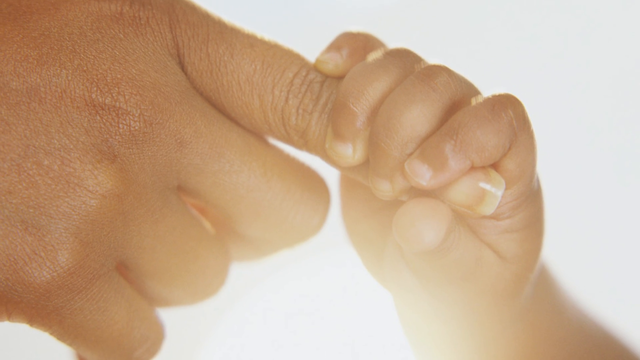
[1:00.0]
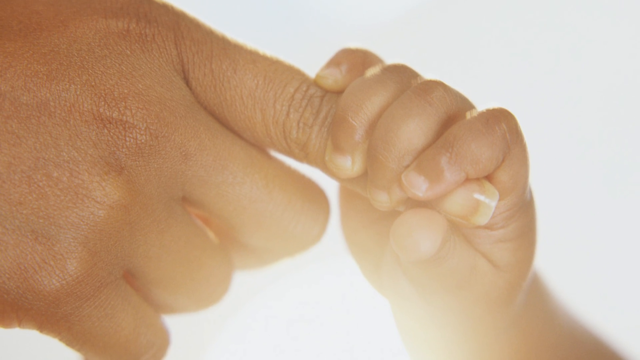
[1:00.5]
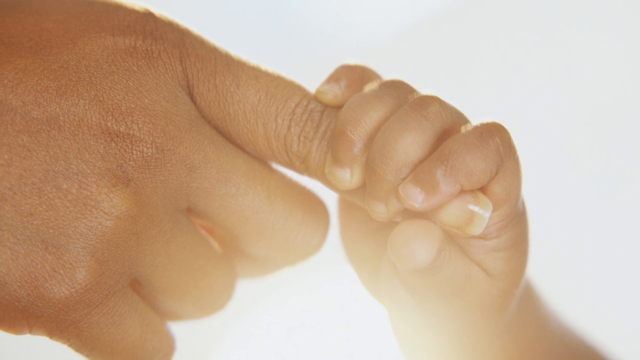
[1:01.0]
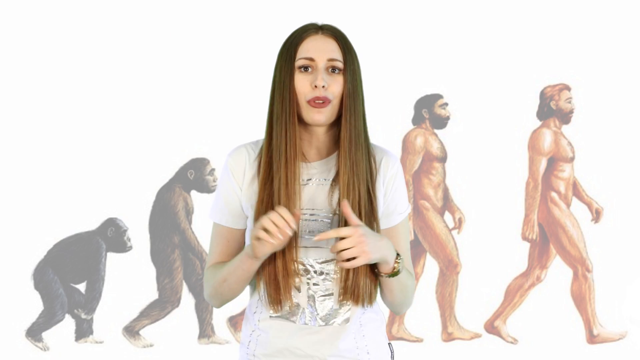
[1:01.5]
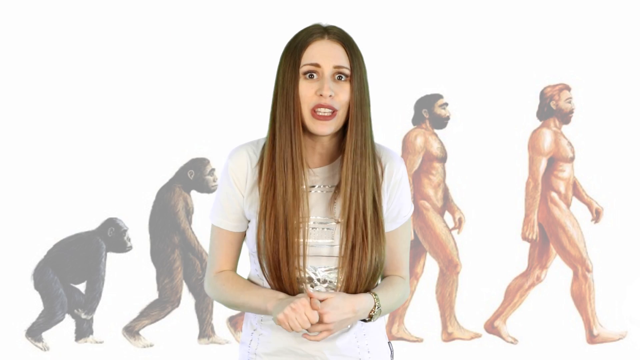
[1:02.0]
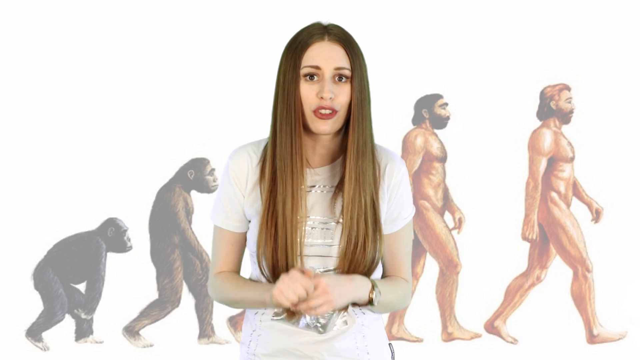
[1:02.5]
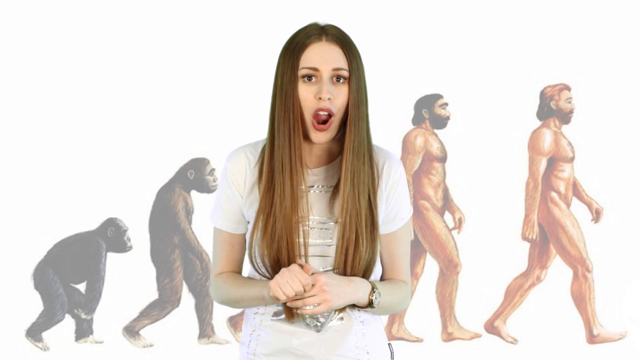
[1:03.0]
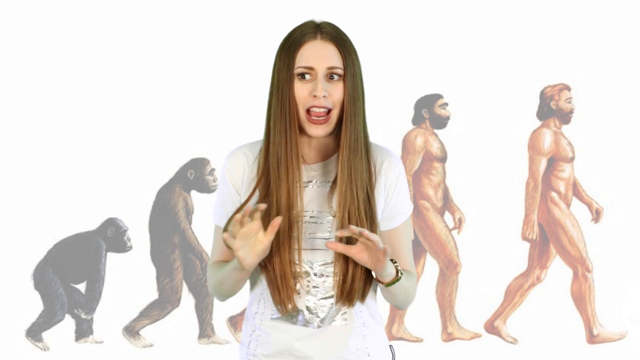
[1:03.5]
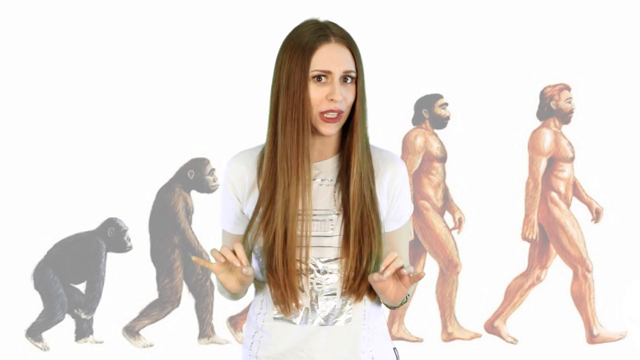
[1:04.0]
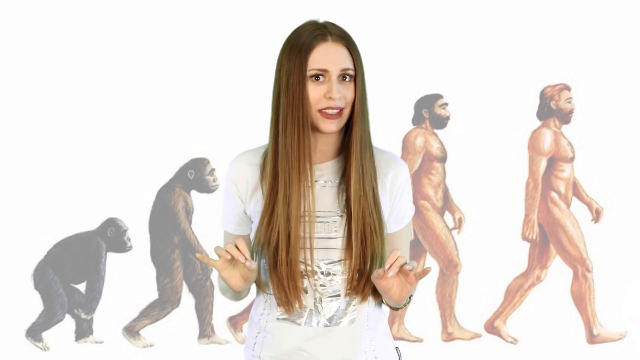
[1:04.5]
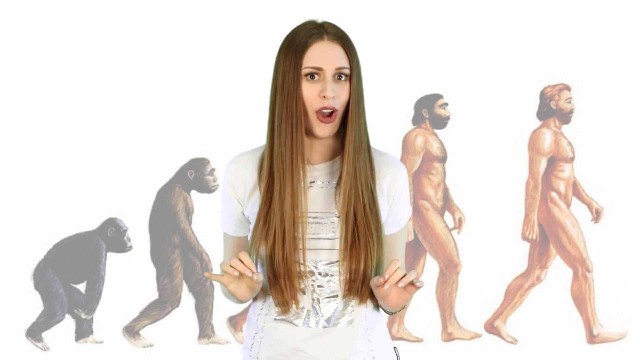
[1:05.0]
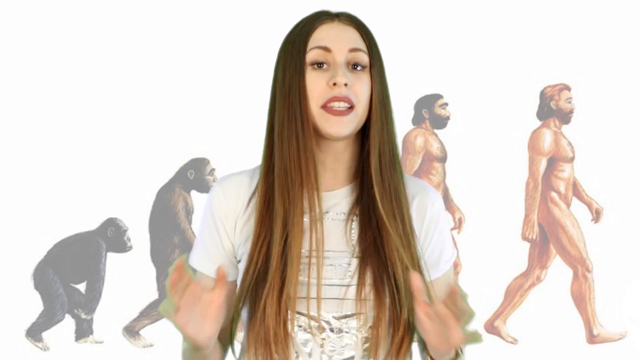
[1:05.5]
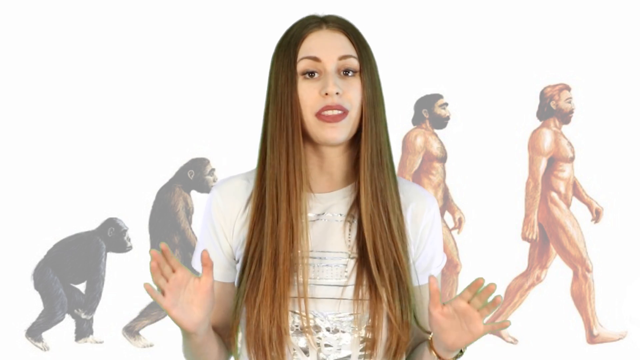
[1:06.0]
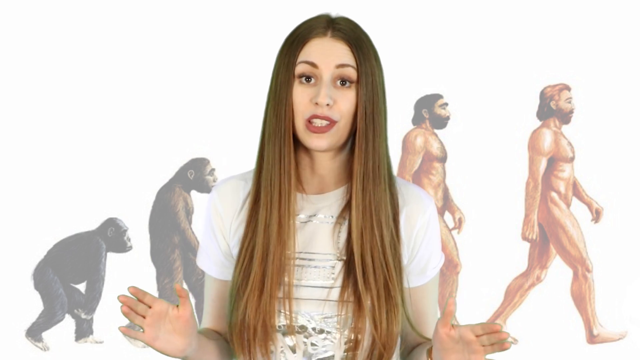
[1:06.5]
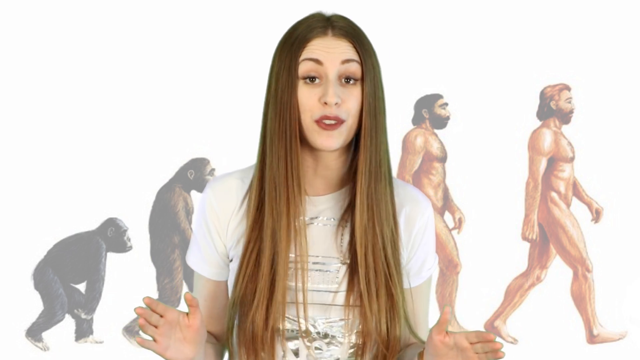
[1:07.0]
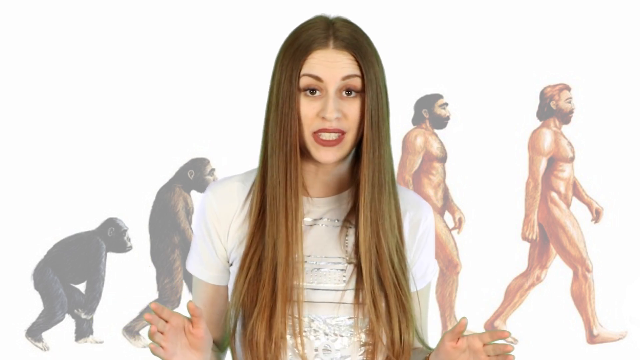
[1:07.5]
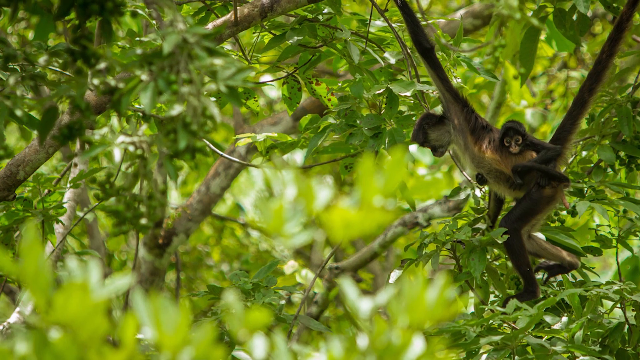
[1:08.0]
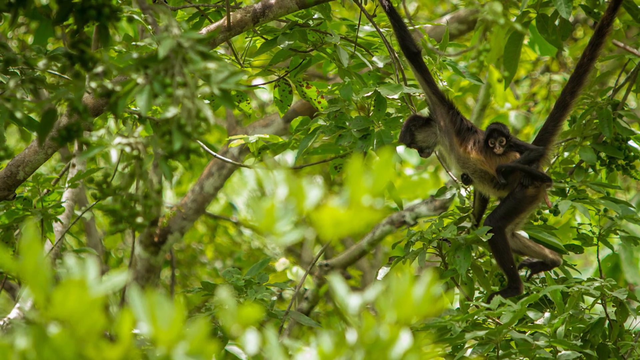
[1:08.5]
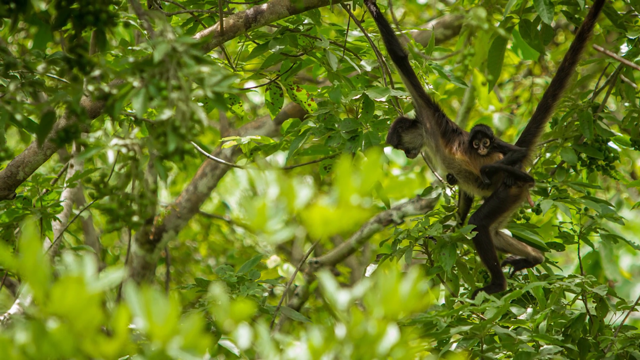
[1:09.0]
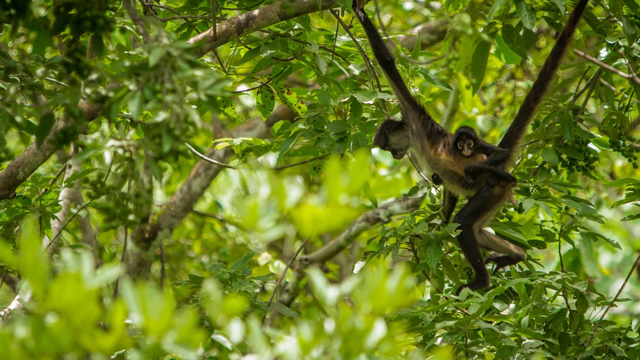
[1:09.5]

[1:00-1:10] The image of the baby holding an adult hand with the sun in the background swipes across the screen from left to right. Charlotte then holds her left index finger with all four fingers of her right hand, clasping around it and shaking her hands, seemingly illustrating the motion shown in the two previous images. She puts her index finger, middle finger and thumb together and gestures near the bottom of the screen, then makes circular motions with her right hand. An image of a baby monkey and an older monkey on a tree background appears, then swipes away from the center, and another image shows a monkey walking on a tightrope.